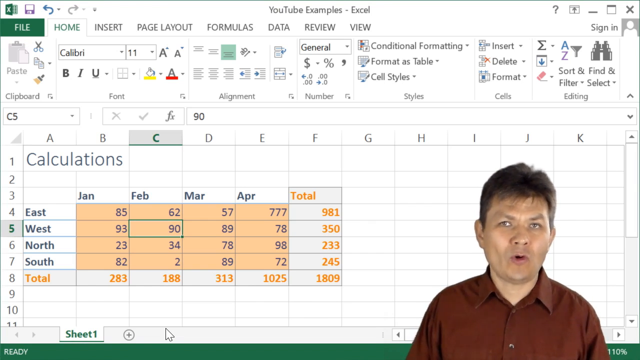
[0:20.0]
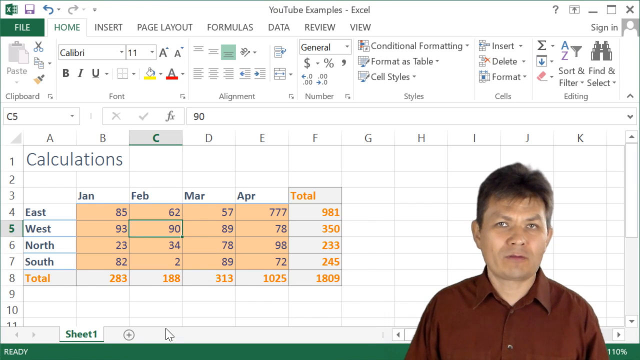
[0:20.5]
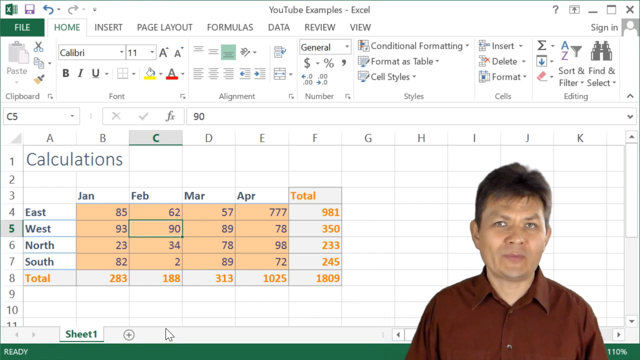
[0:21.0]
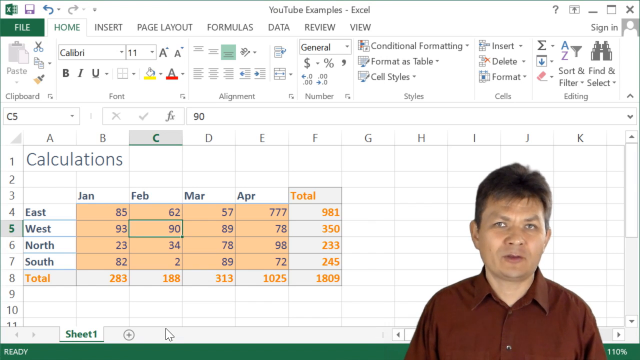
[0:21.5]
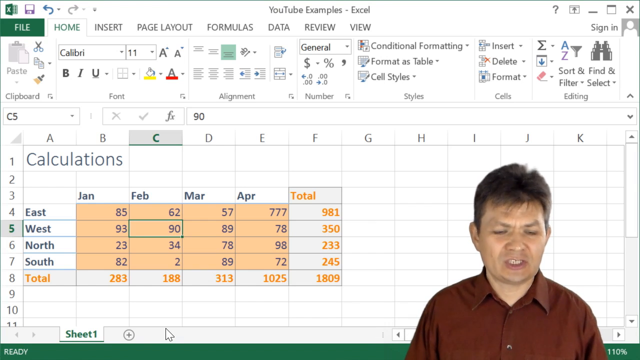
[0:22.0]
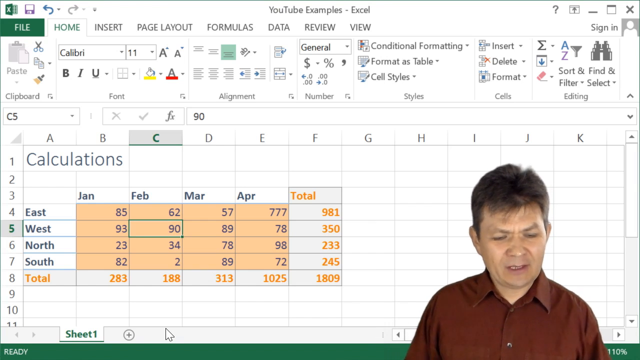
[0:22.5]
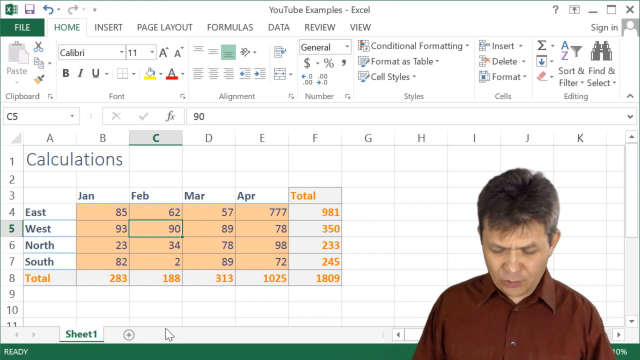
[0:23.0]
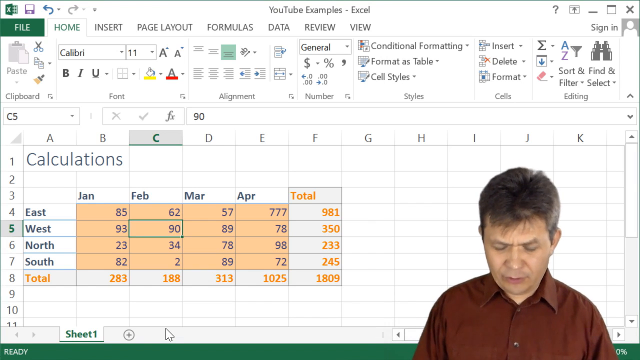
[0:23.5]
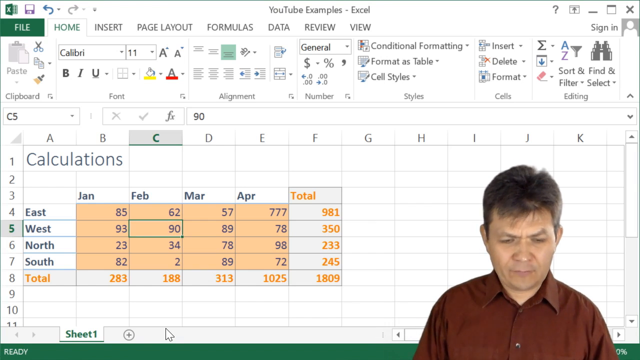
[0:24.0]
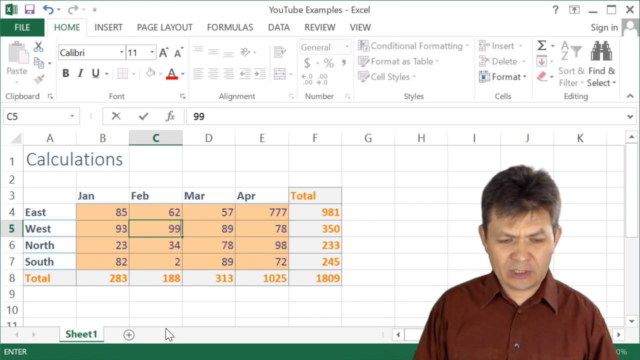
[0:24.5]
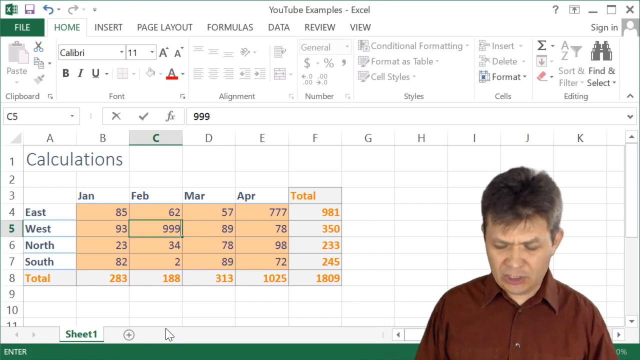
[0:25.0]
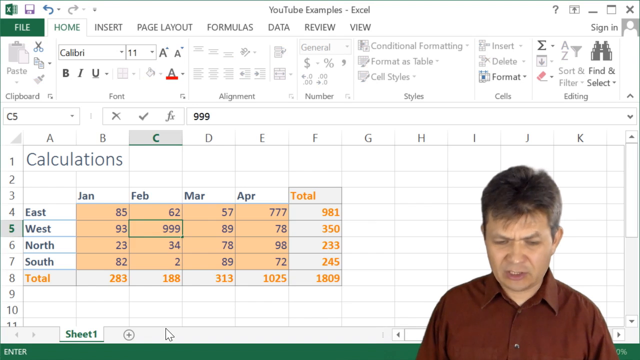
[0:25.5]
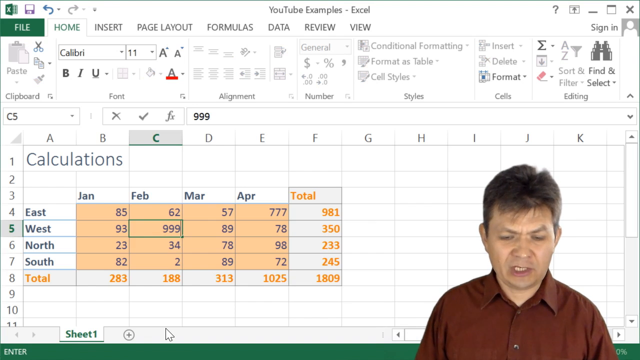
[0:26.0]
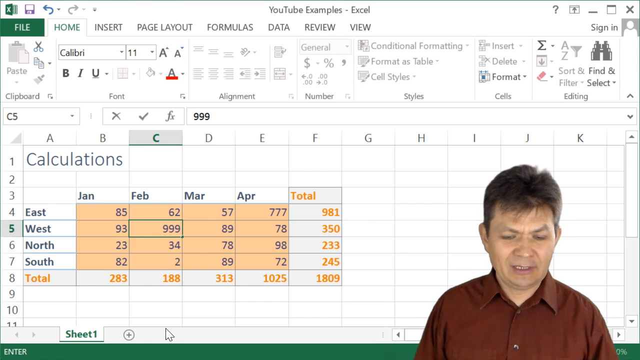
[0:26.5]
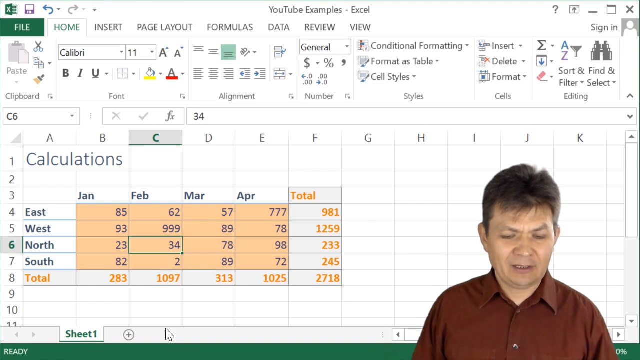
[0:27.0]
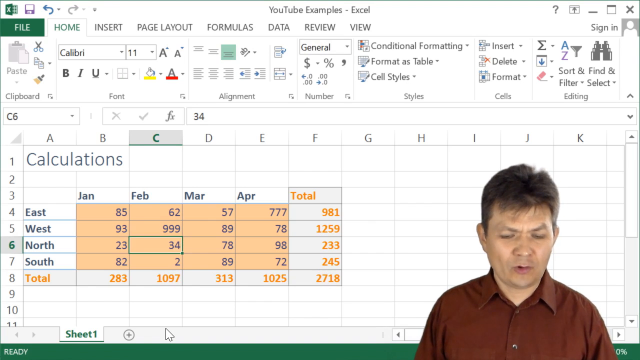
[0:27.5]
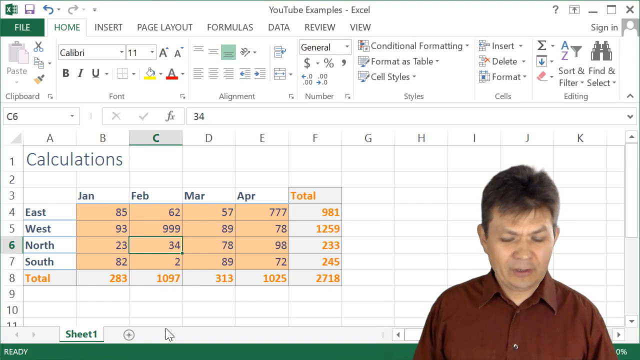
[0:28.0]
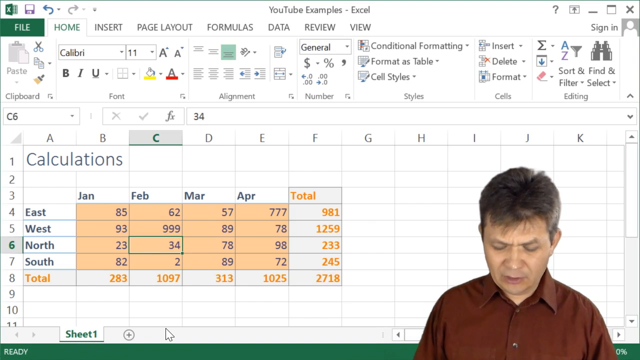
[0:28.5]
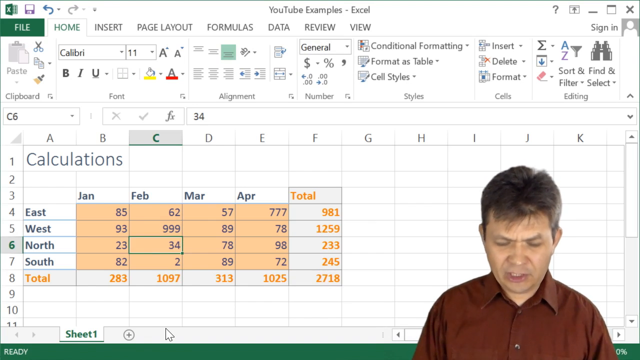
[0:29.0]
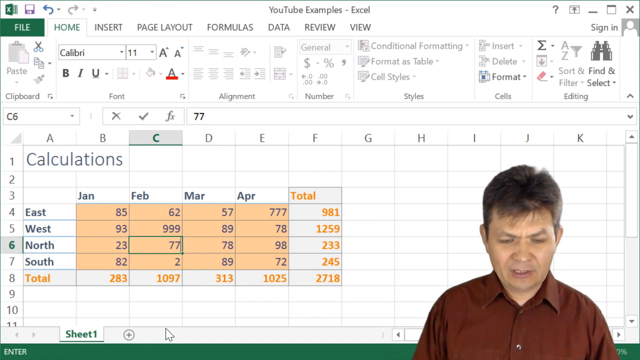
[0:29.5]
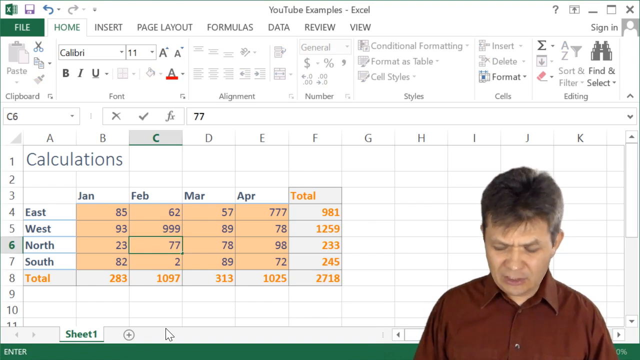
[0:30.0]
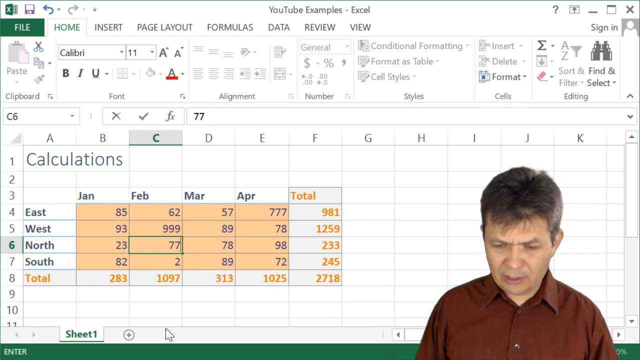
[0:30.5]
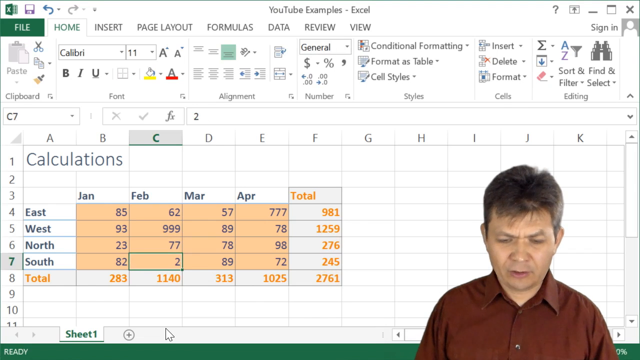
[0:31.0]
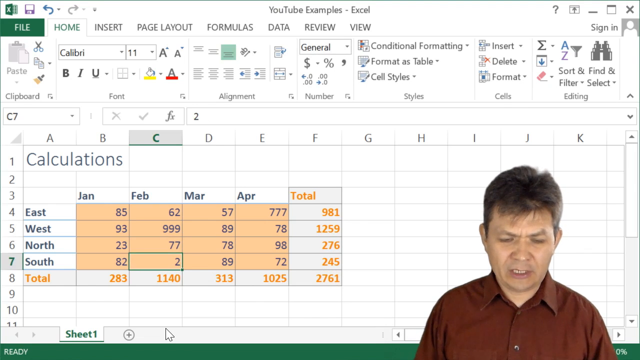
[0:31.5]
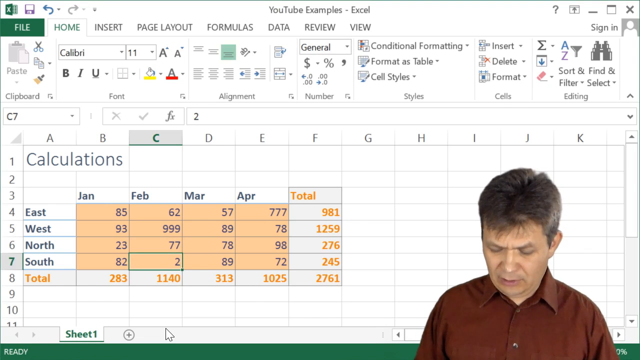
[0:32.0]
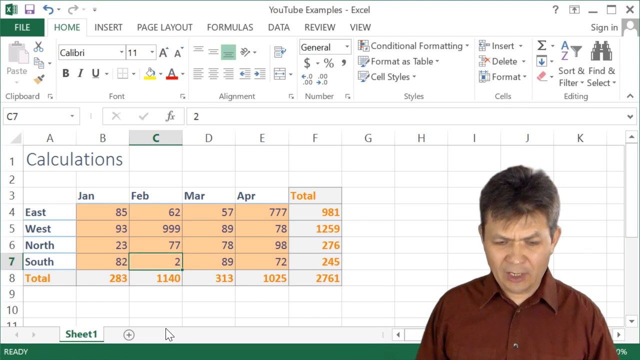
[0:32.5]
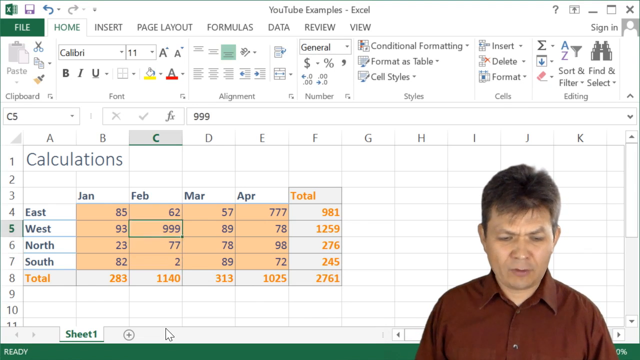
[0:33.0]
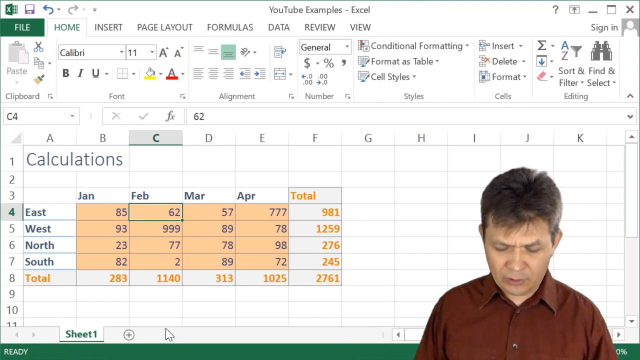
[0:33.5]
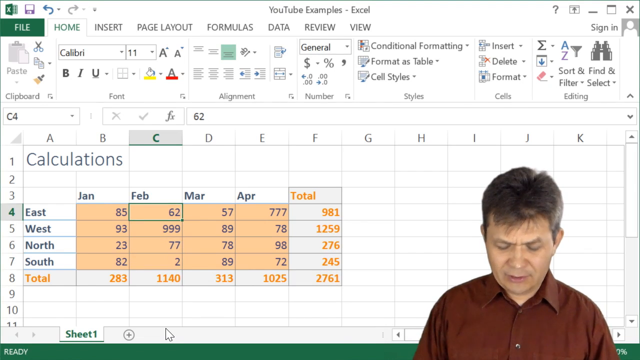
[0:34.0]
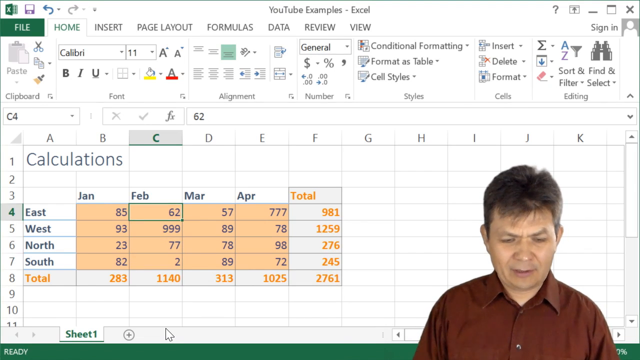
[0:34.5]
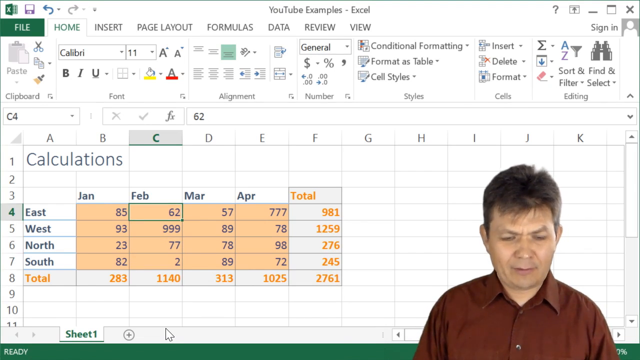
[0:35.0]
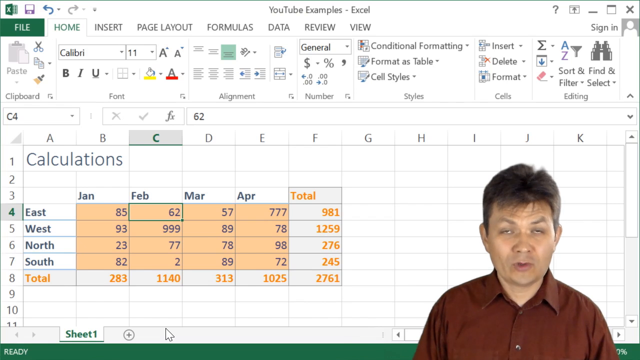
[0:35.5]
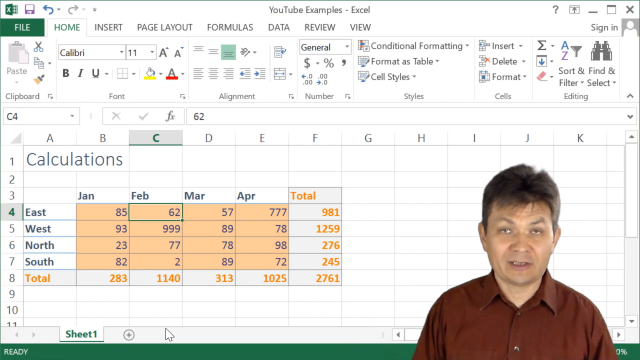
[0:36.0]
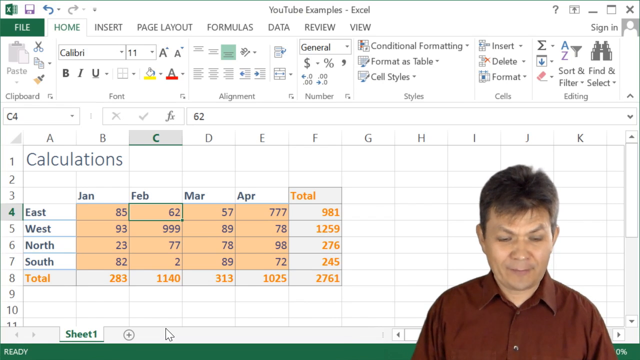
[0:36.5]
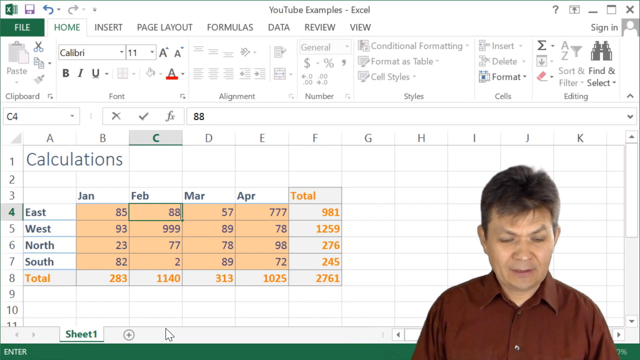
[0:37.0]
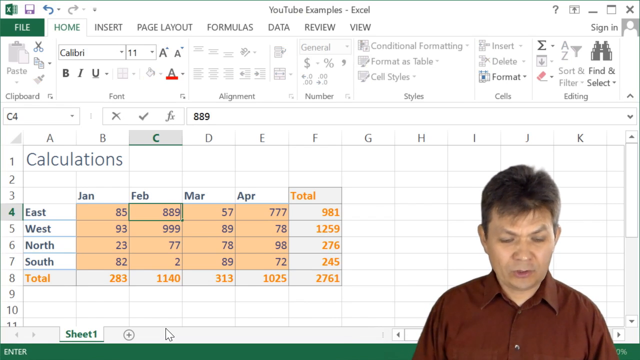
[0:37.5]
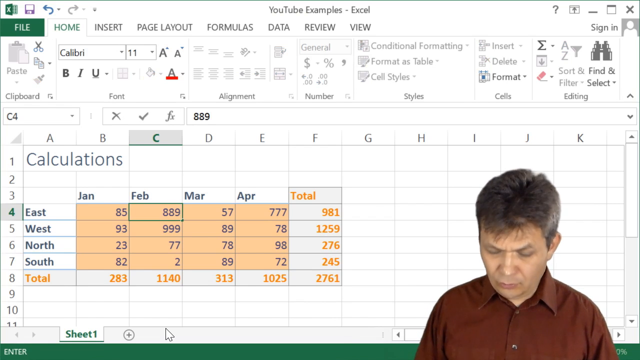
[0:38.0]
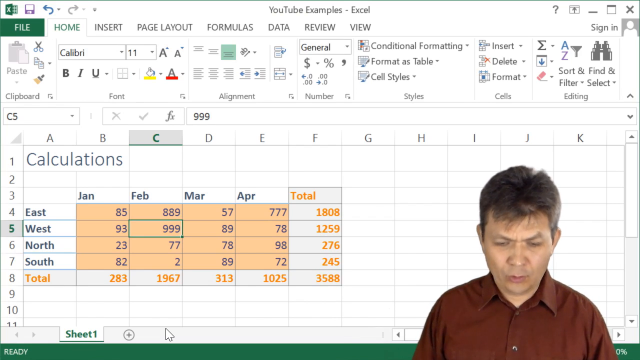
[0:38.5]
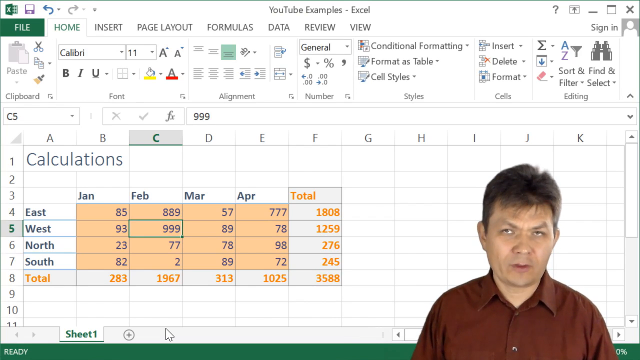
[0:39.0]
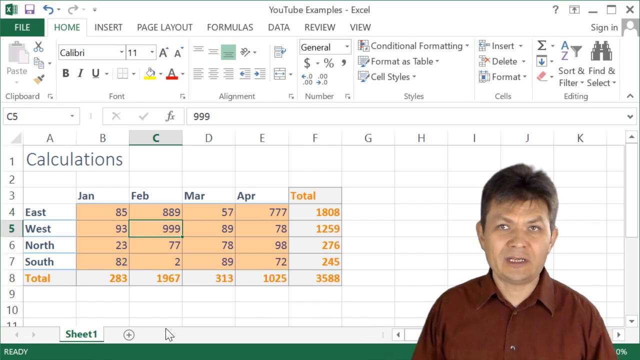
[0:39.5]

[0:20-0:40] The video concerns the Excel spreadsheet and its automatic calculation feature, which can be turned on or off.